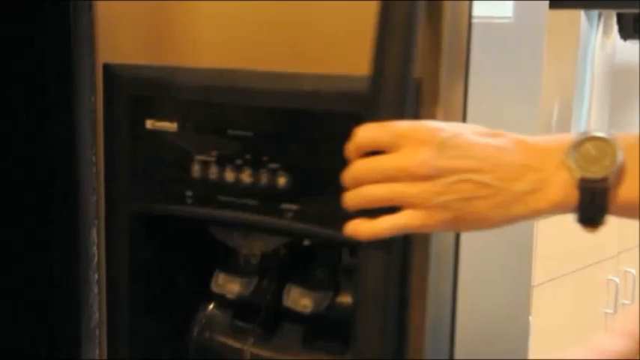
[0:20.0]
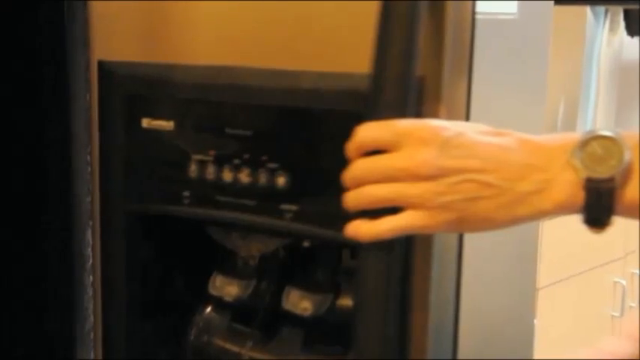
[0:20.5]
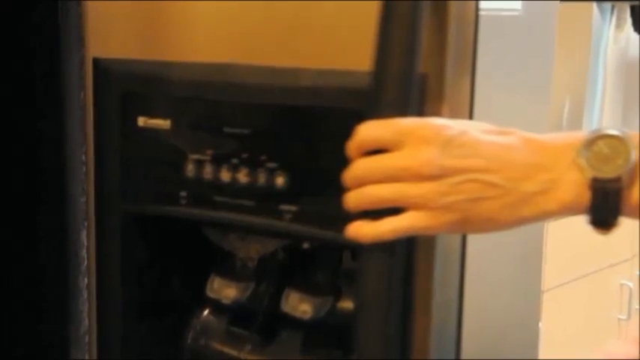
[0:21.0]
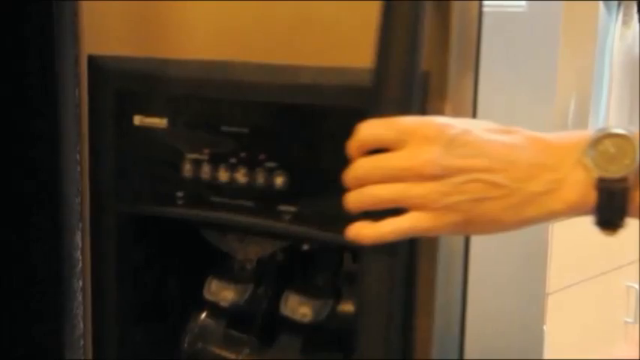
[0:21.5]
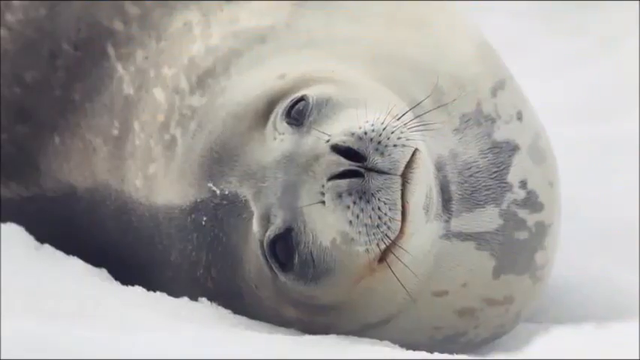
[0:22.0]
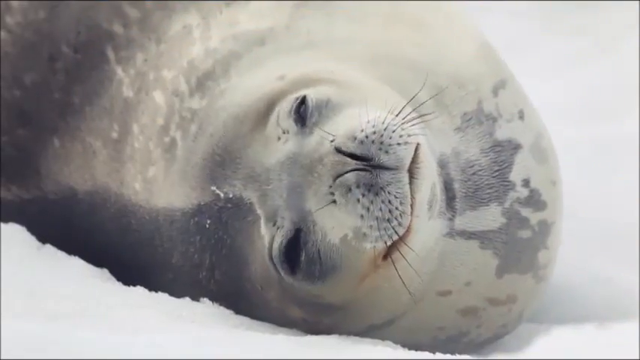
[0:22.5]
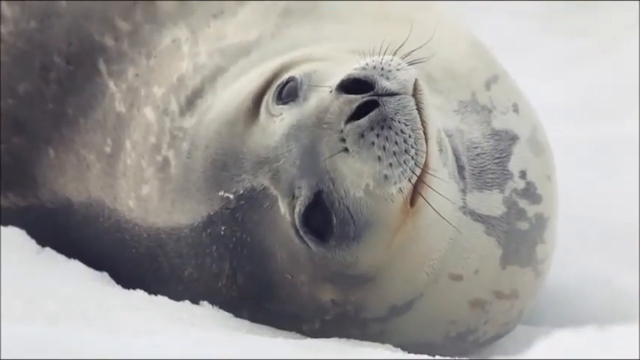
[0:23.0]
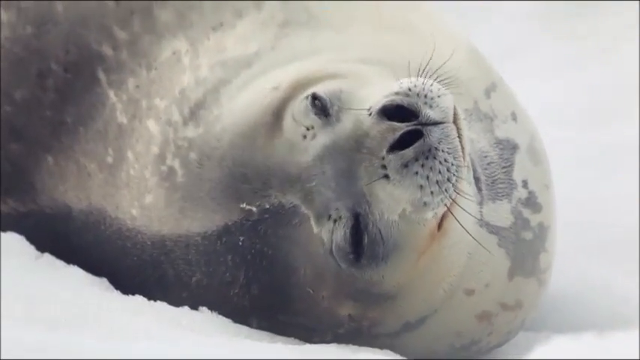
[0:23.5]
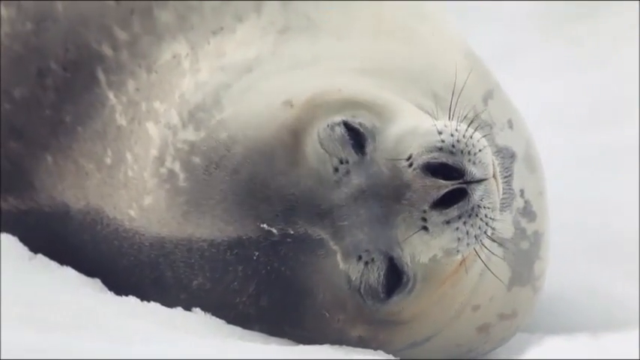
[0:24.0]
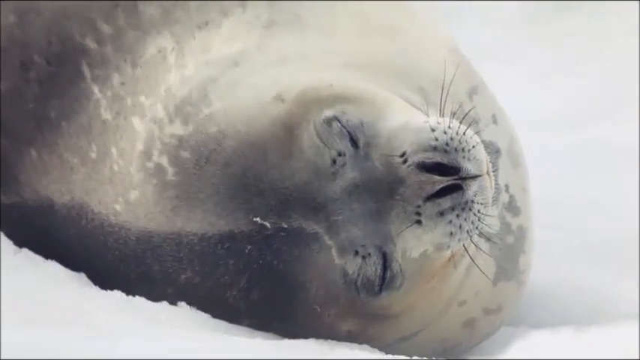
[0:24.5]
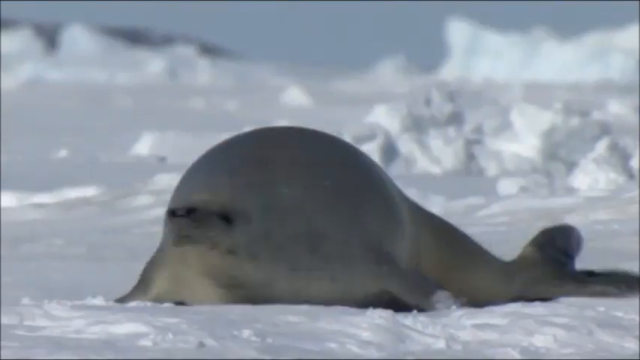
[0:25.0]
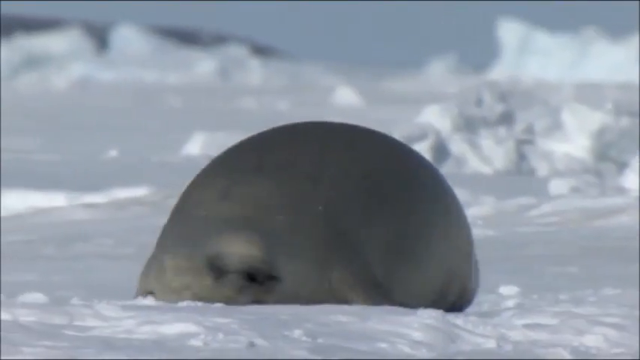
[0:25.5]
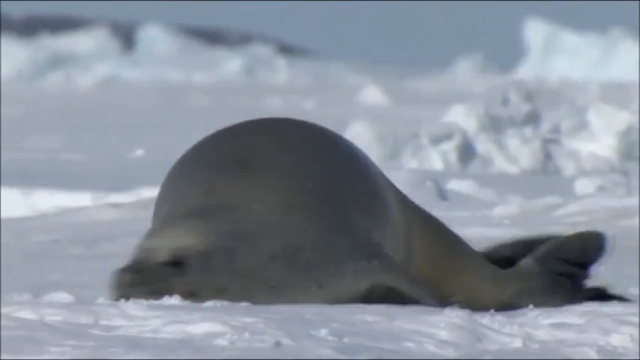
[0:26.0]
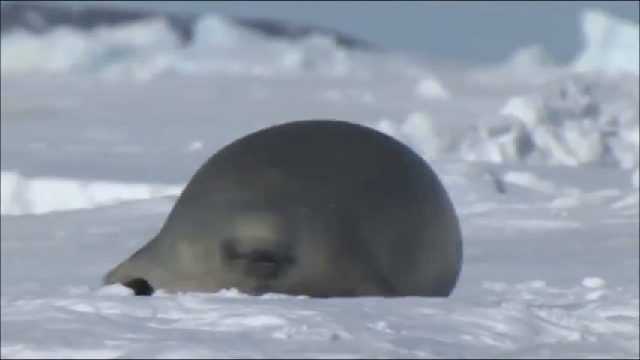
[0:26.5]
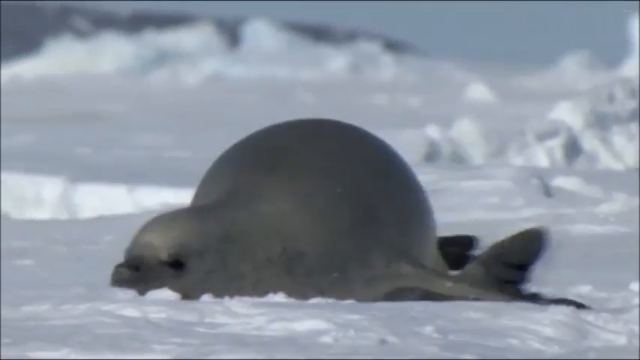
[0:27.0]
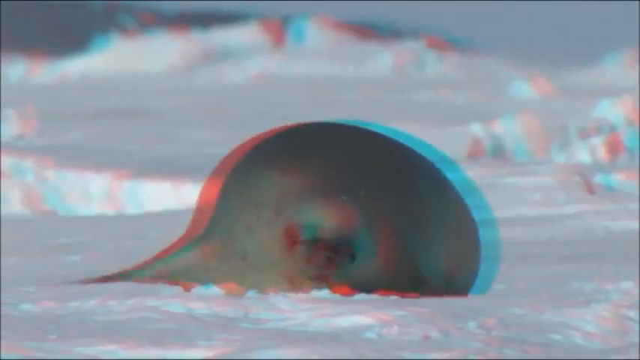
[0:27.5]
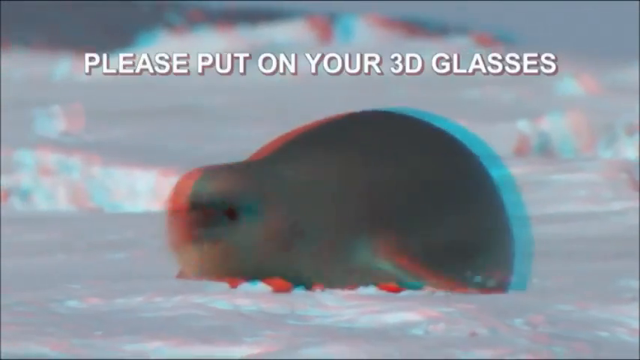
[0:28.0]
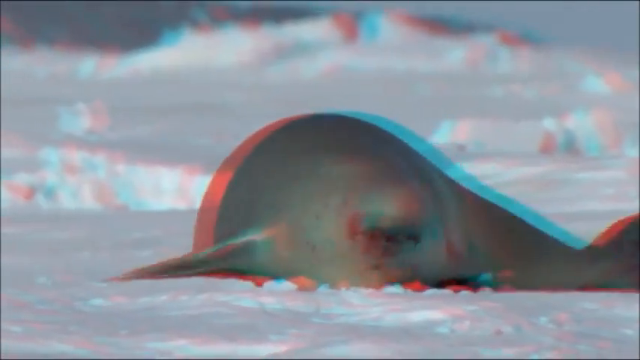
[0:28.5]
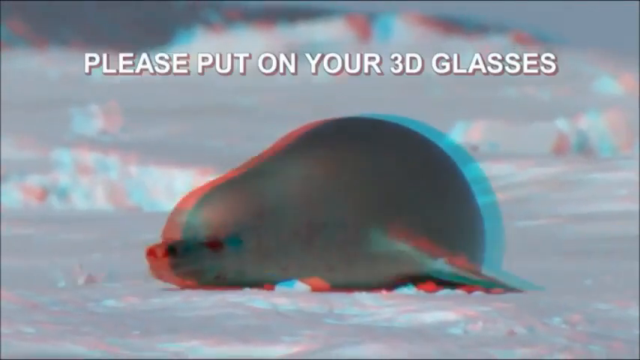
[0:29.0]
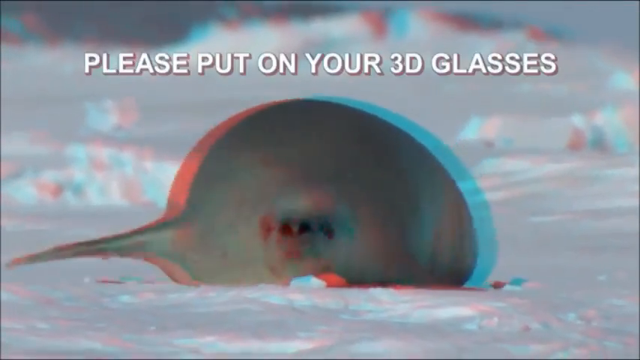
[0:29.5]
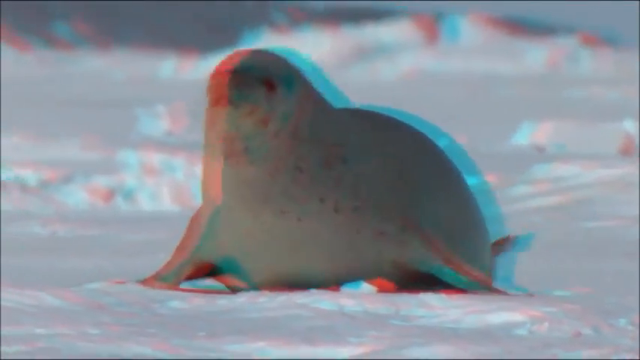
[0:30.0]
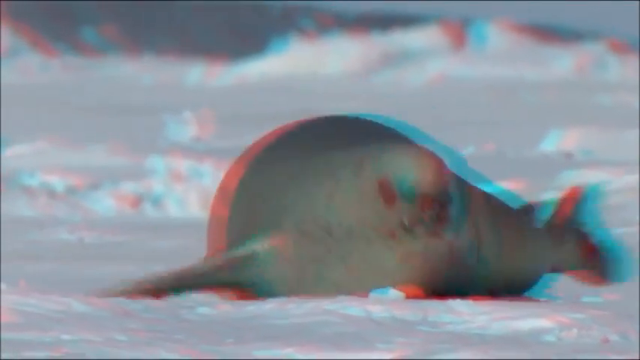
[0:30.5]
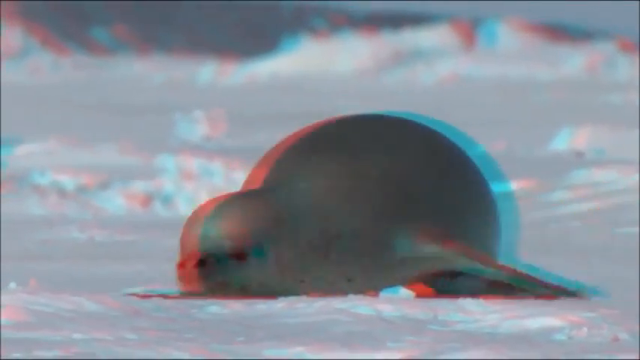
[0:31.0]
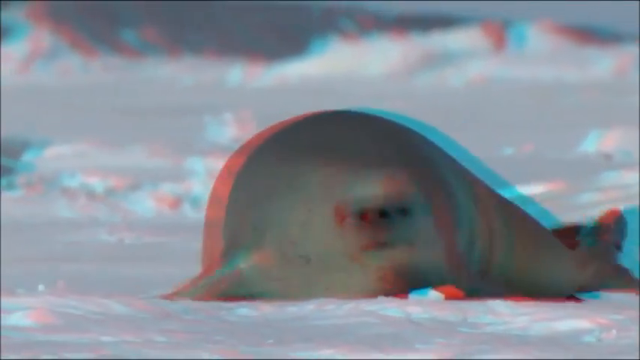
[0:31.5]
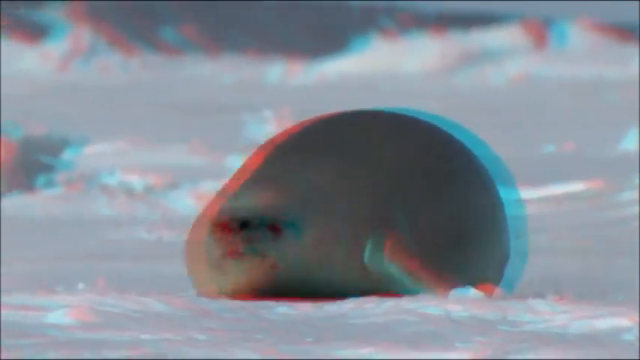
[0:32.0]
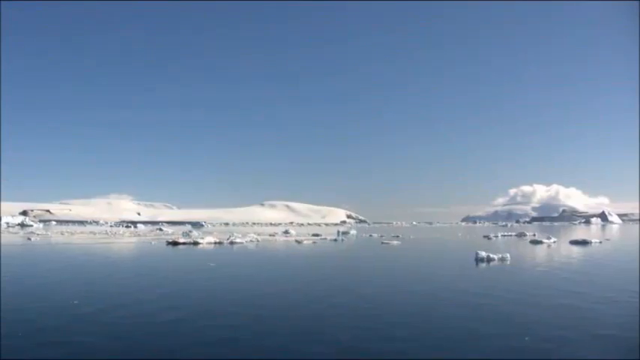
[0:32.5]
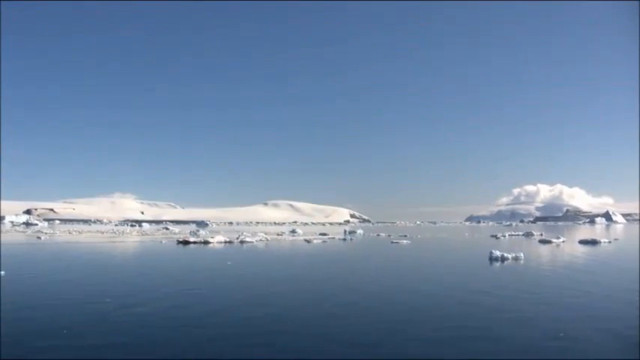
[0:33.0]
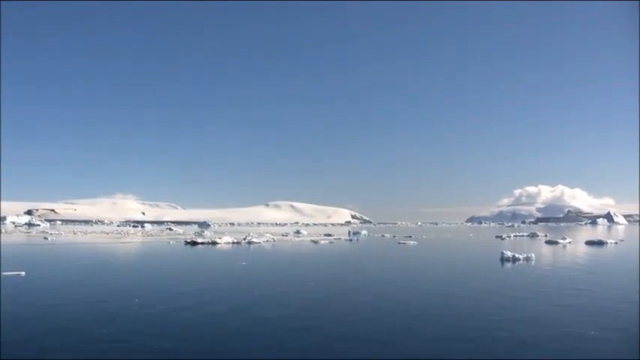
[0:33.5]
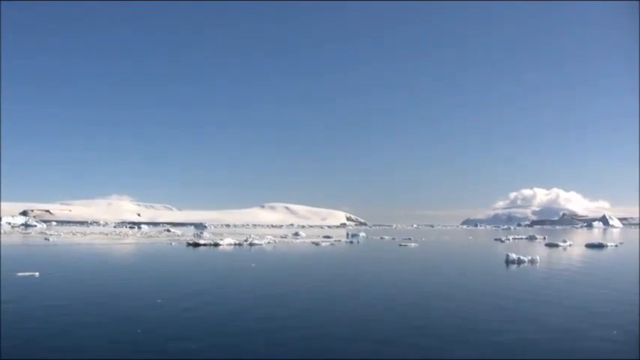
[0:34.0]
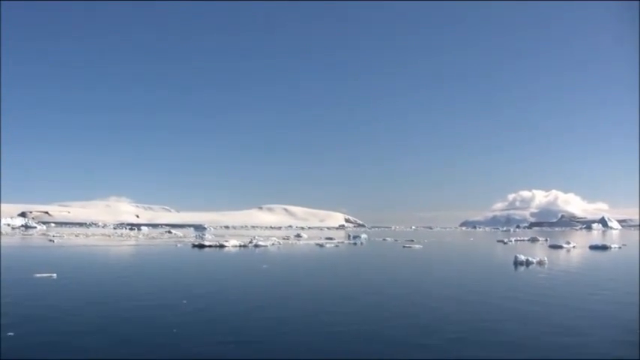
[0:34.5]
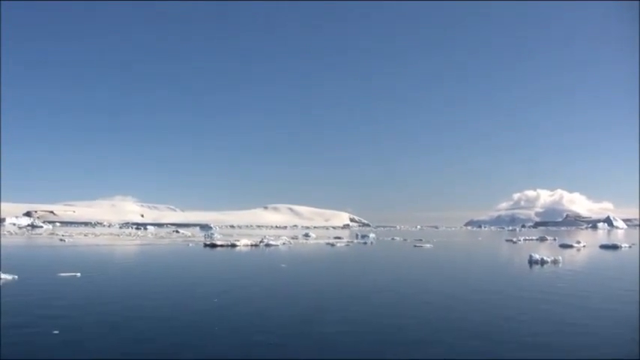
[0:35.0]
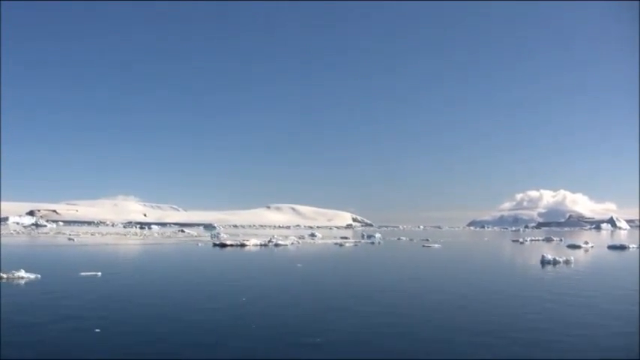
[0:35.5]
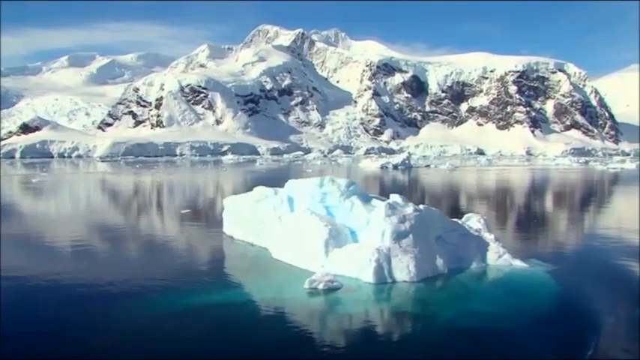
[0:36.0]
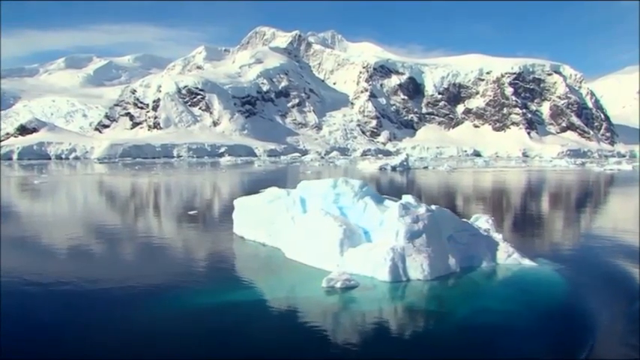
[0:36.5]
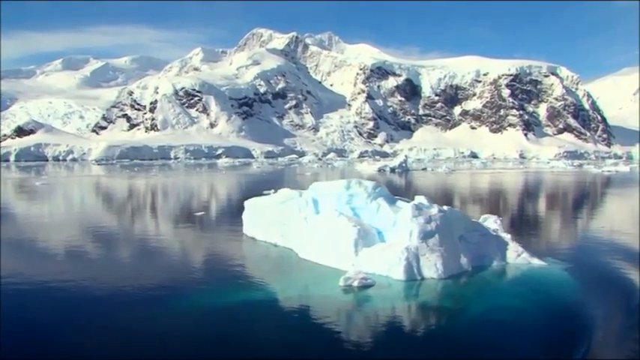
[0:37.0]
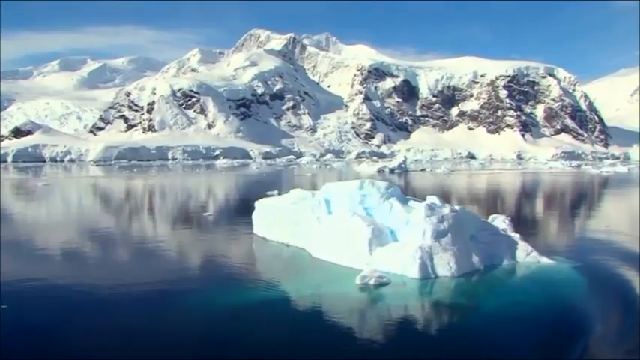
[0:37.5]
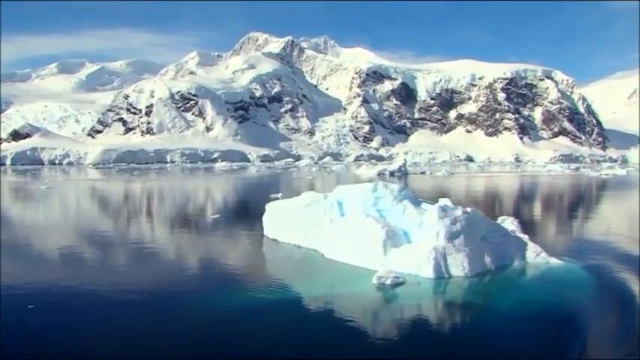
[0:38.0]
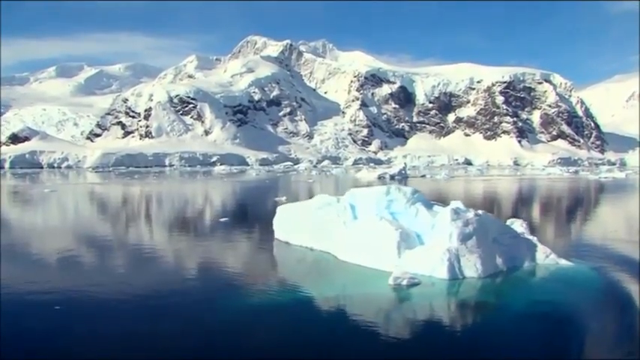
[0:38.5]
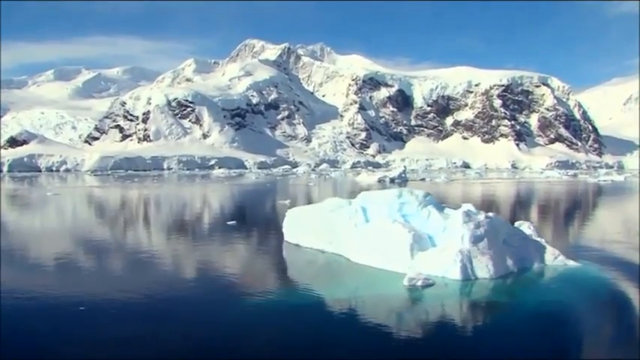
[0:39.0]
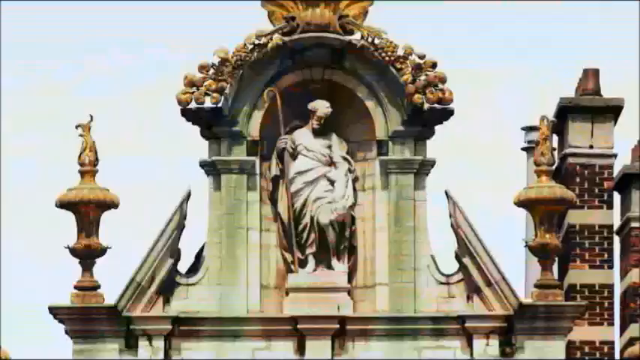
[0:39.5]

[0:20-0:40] A man's left hand, with a gold and black wristwatch on the left wrist, opens a refrigerator door; the video freezes dramatically and zooms in a bit. The scene cuts to a seal with gray and white skin lying on its side in the snow, with black eyes and whiskers, almost smiling at the camera and blinking. Then a very large seal wiggles its way across the snow. A blue and red effect appears around the seal, with the words "please put on your 3D glasses" above it; the words keep blinking on the screen as the blue and red 3D effect continues on the seal wiggling across the snow. The video cuts to a perfectly calm ocean with snow and small glaciers of ice and barely a cloud in the sky, then to a large glacier reflected in blue water with large mountains behind it, and then to a photo of old, historical-looking buildings.